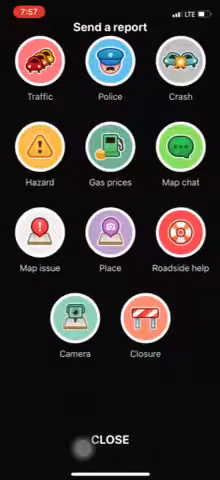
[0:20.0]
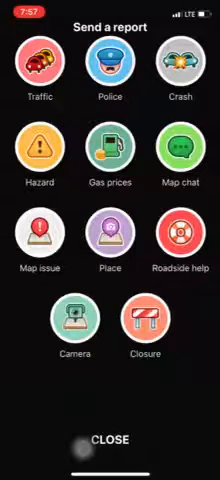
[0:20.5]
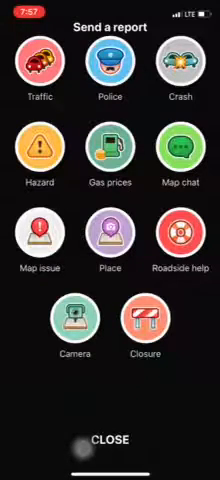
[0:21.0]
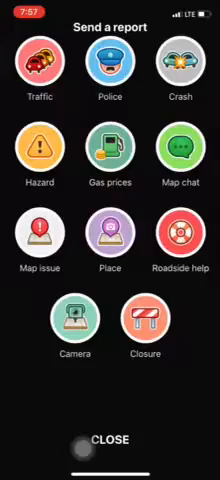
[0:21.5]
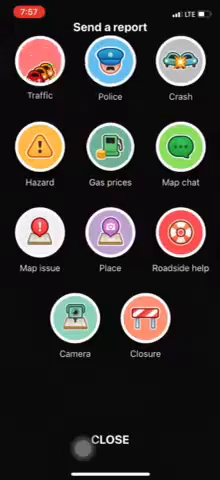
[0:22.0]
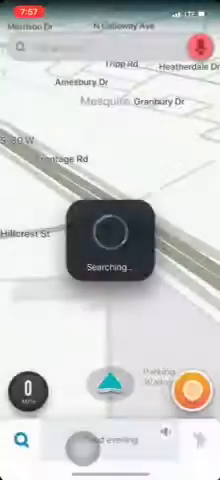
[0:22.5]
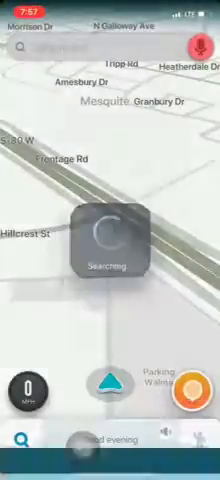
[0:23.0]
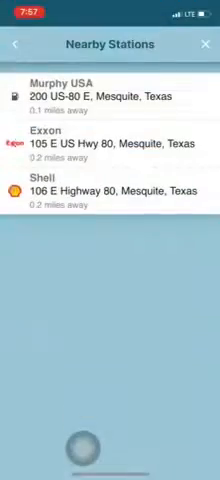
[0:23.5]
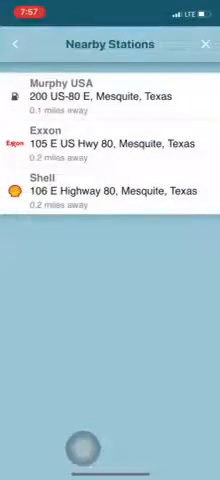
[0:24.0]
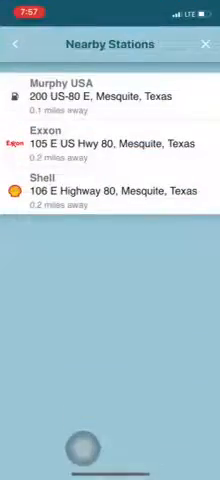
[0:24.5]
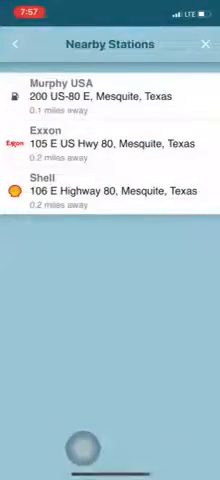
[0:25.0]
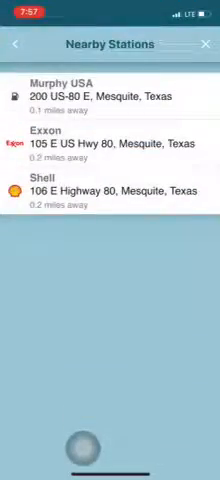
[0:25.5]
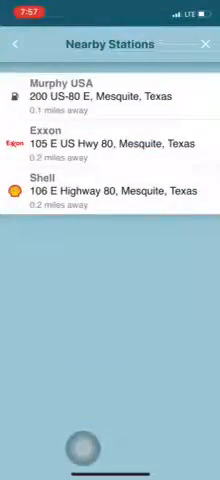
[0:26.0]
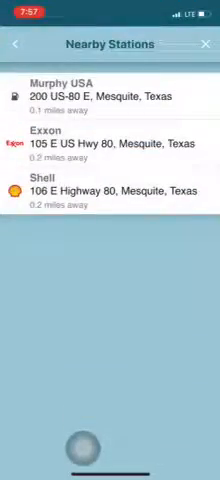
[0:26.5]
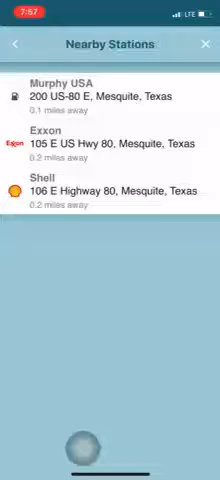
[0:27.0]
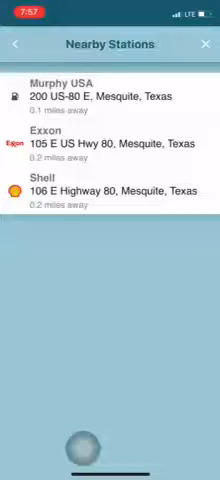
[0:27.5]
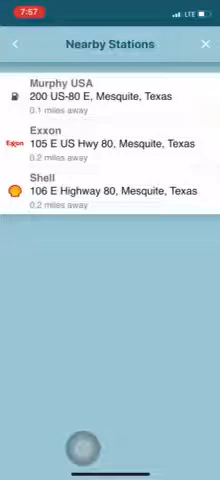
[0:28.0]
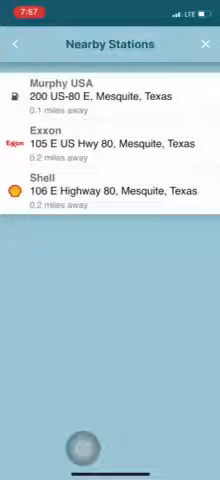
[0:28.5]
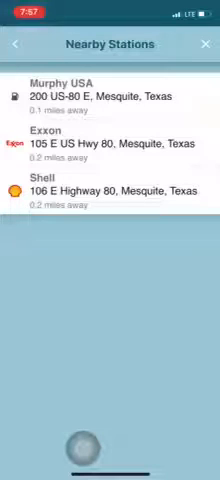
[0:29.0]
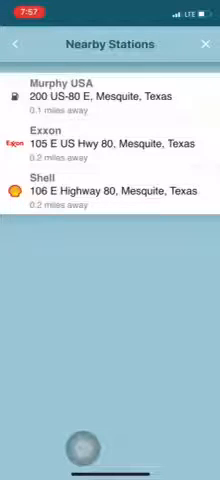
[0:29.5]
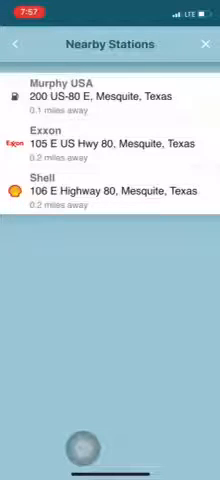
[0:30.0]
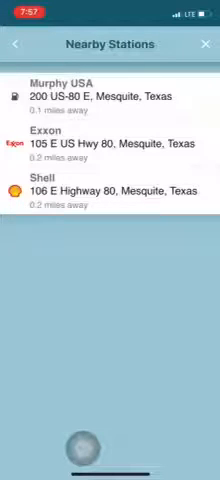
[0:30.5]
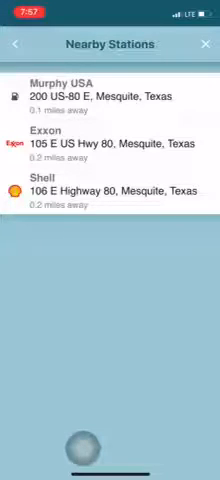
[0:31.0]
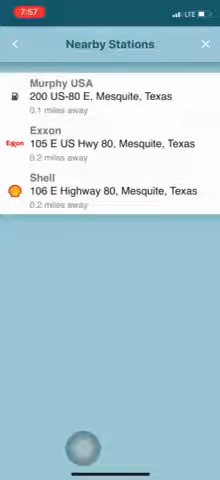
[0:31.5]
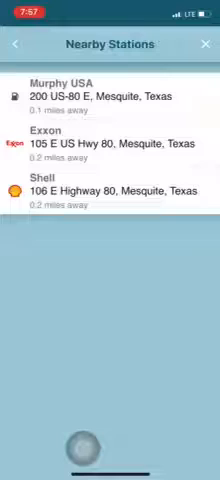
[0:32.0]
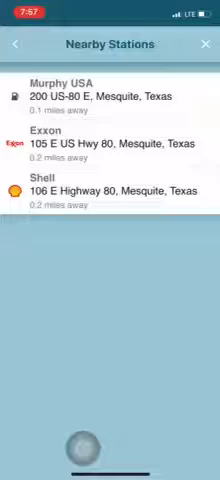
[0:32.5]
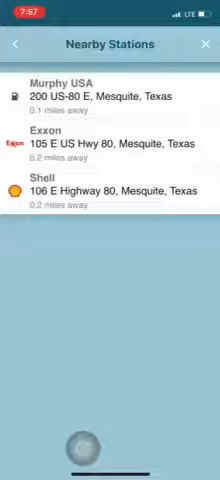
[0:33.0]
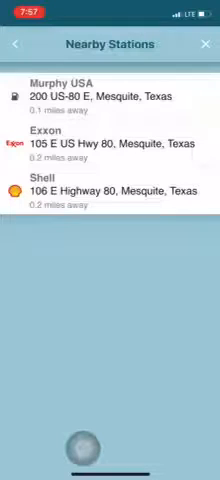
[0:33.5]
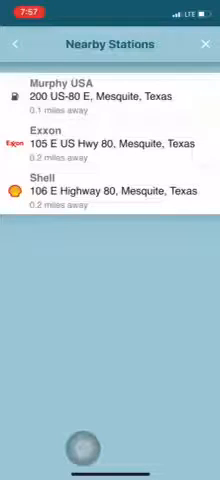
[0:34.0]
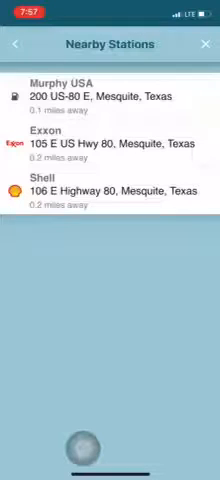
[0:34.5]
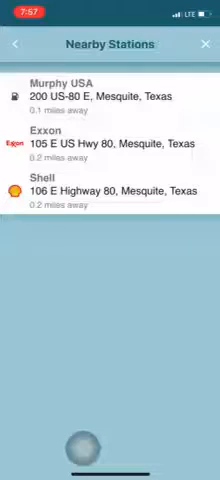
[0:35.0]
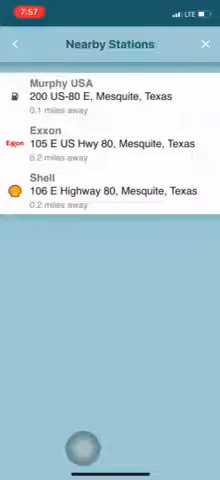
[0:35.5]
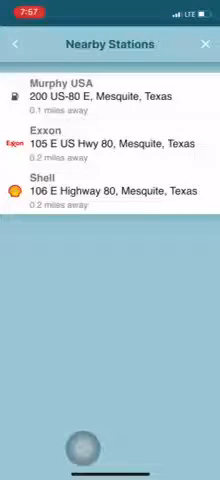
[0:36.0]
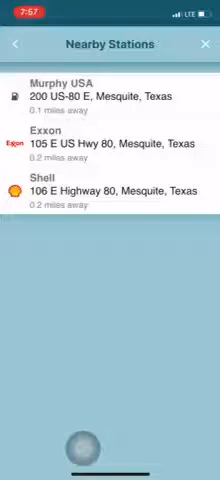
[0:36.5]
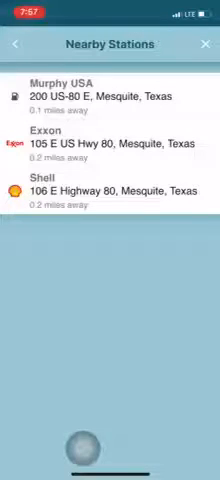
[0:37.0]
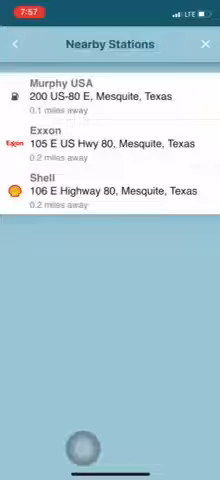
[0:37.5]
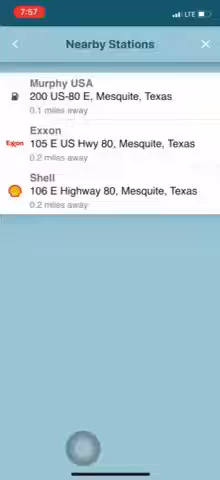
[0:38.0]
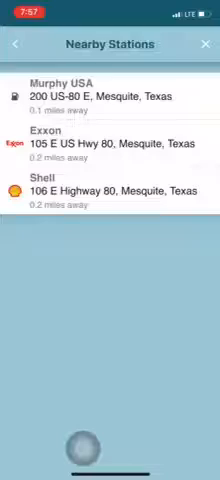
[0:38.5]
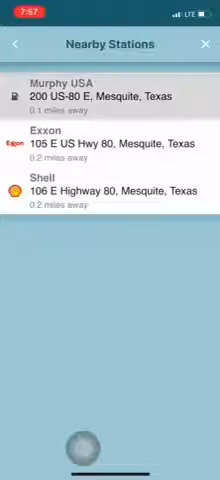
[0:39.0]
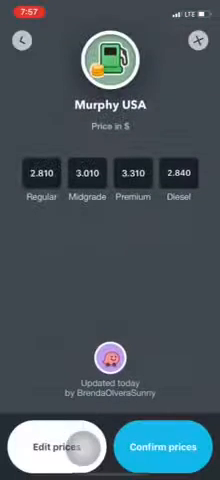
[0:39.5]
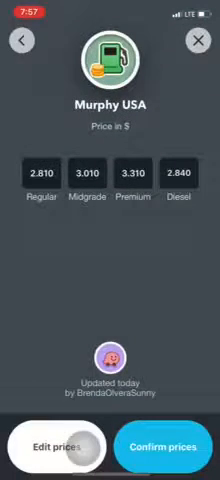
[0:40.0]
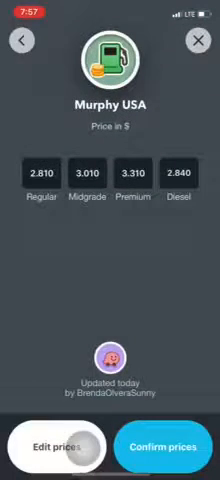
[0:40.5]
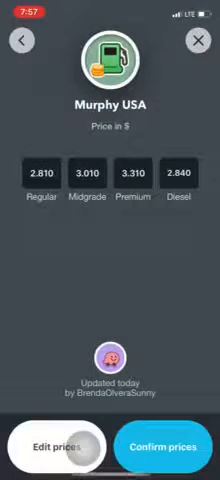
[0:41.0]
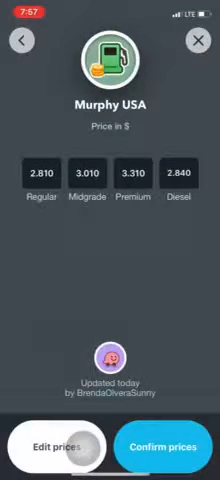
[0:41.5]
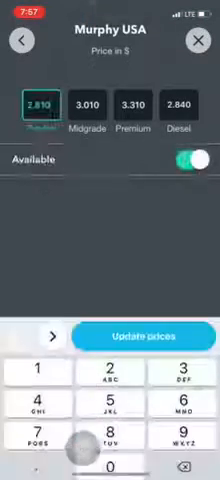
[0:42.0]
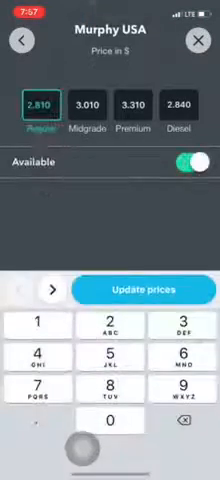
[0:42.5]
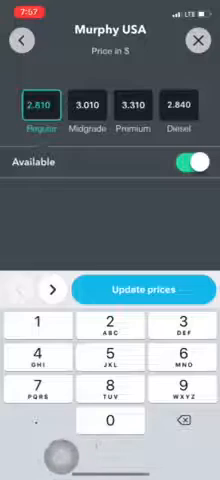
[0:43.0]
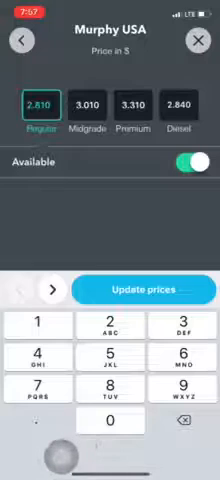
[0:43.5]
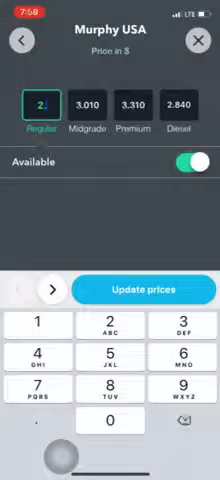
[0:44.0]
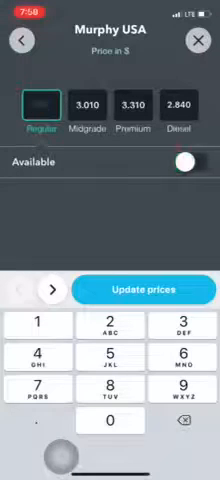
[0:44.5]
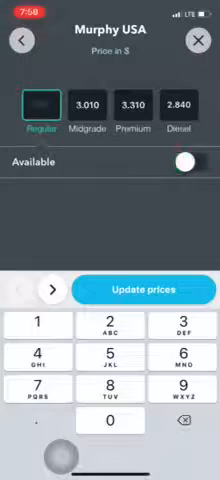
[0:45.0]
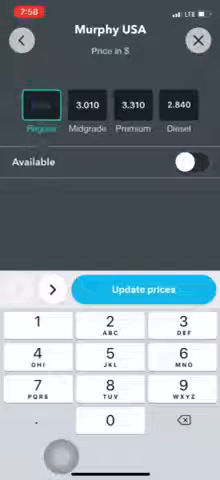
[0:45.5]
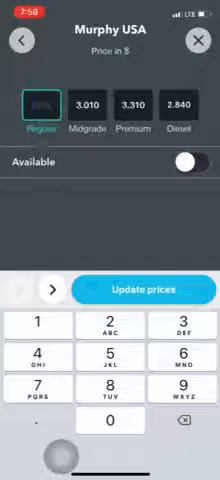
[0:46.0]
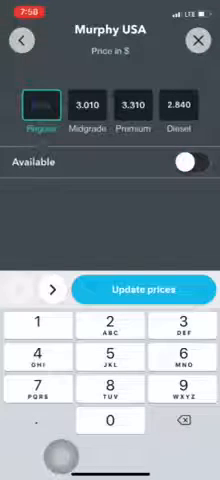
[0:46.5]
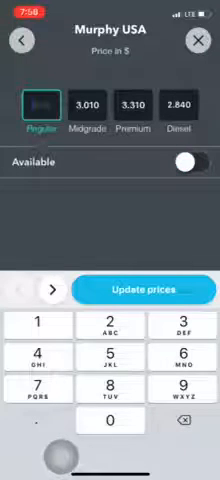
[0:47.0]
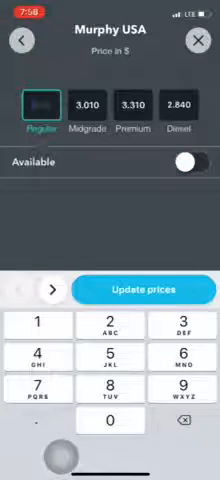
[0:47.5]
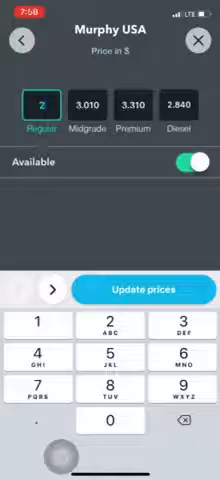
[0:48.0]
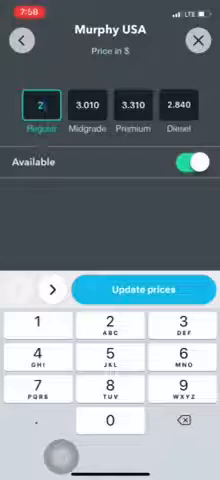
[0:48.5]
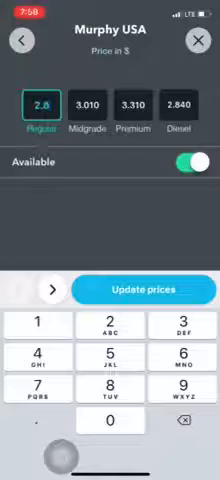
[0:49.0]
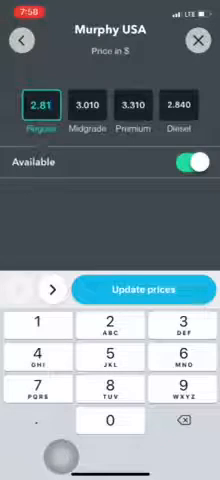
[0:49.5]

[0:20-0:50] The app shows nearby gas stations, such as ones one mile and two miles away, along with the type of gas each station has.